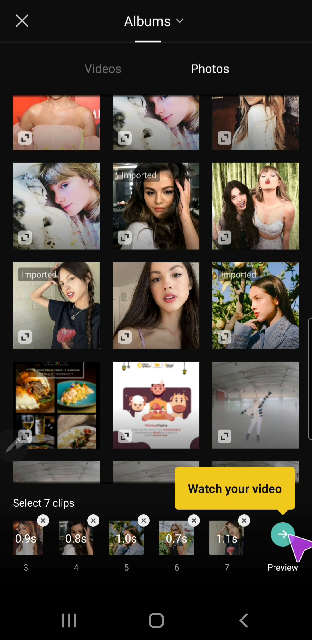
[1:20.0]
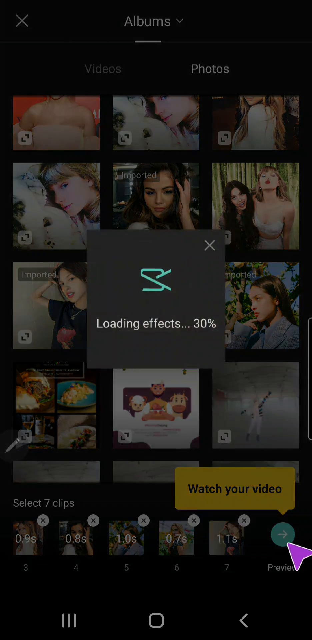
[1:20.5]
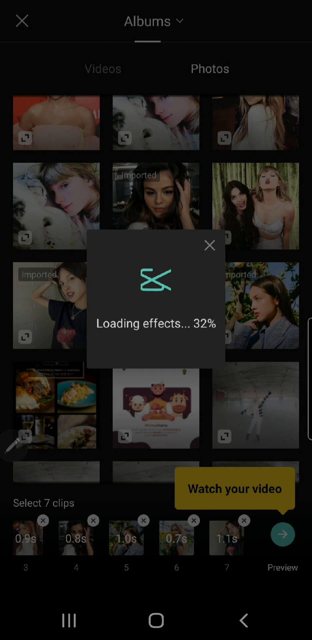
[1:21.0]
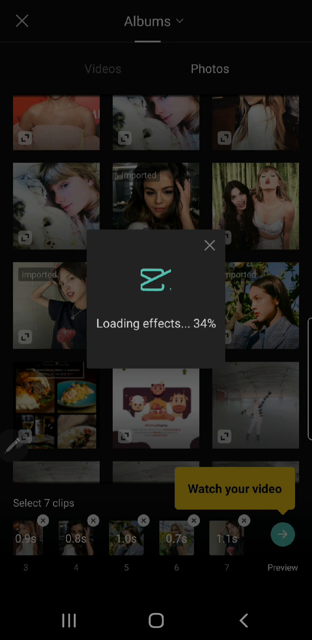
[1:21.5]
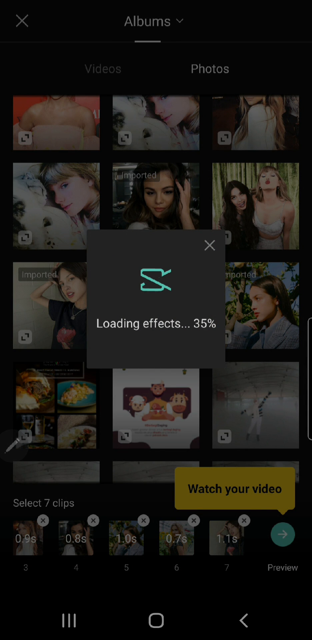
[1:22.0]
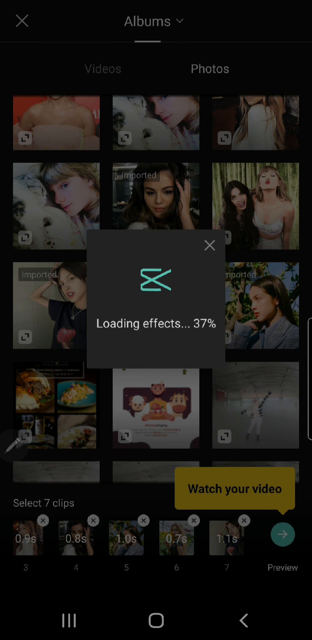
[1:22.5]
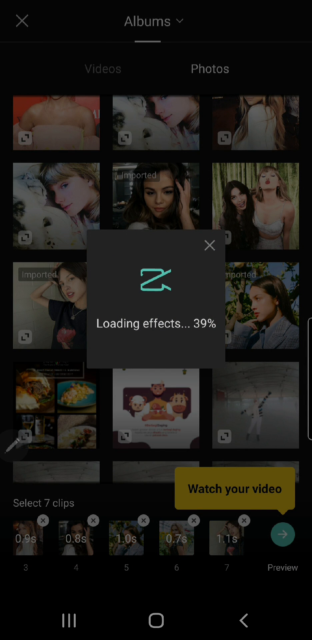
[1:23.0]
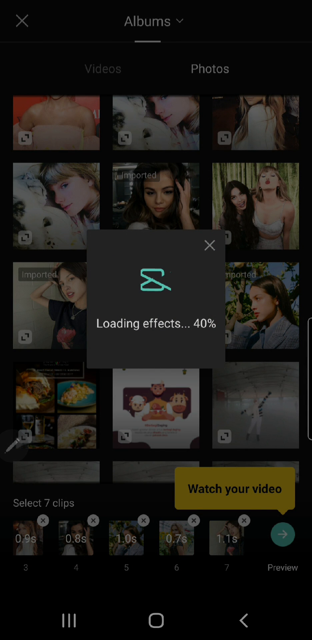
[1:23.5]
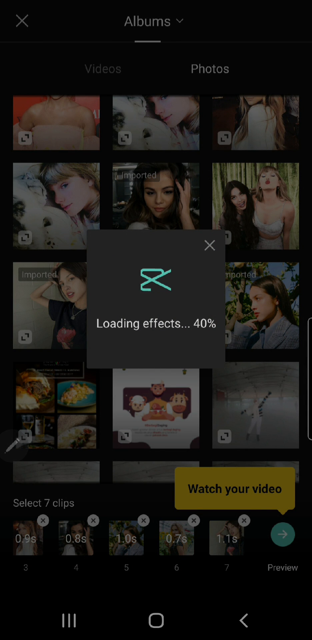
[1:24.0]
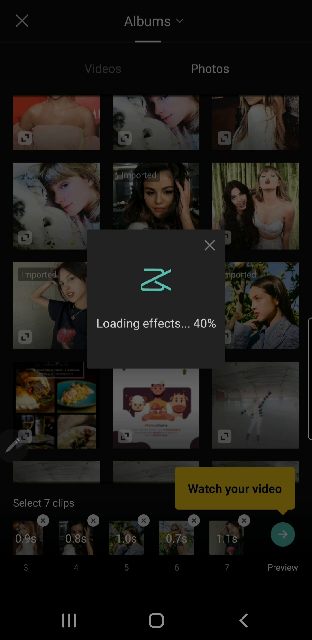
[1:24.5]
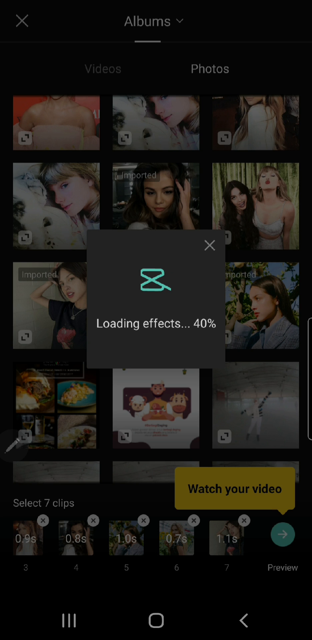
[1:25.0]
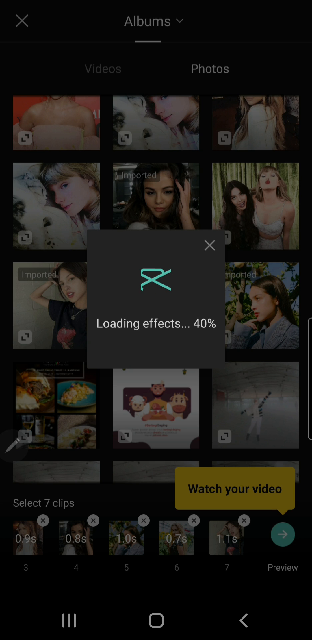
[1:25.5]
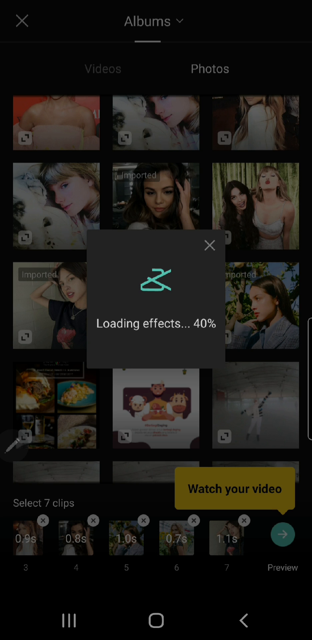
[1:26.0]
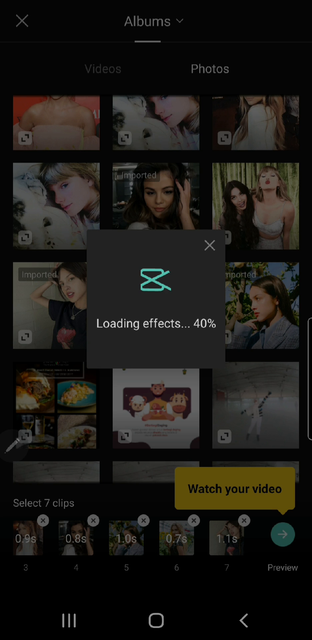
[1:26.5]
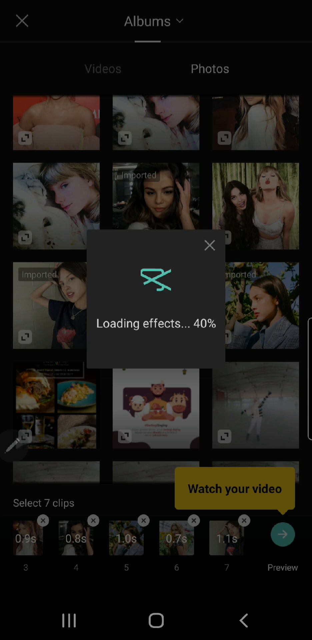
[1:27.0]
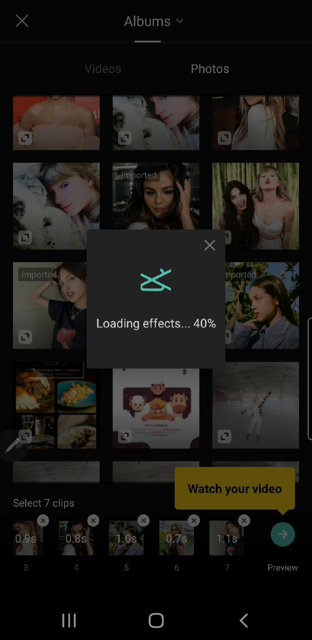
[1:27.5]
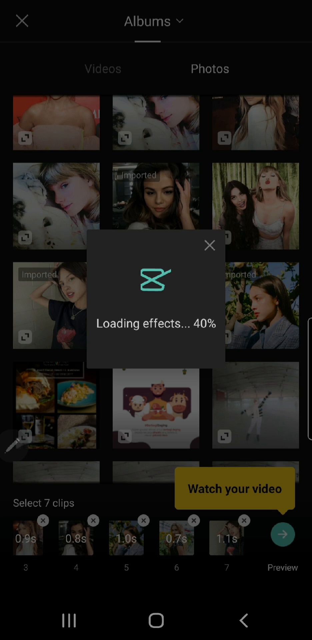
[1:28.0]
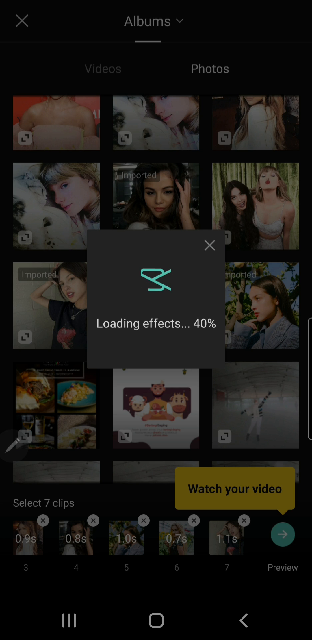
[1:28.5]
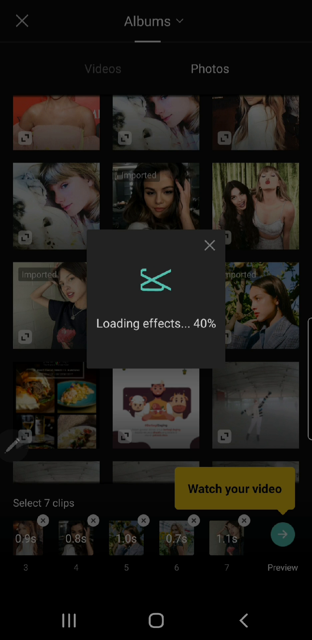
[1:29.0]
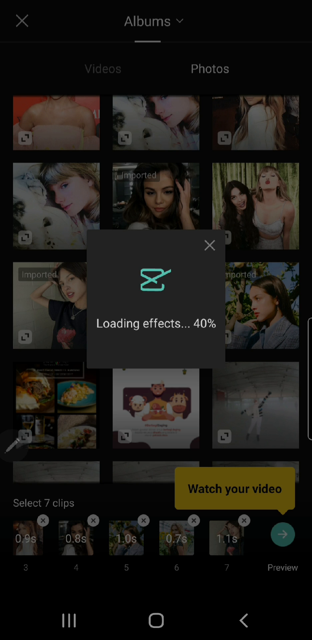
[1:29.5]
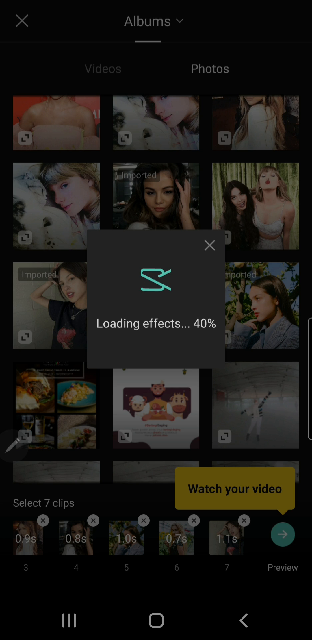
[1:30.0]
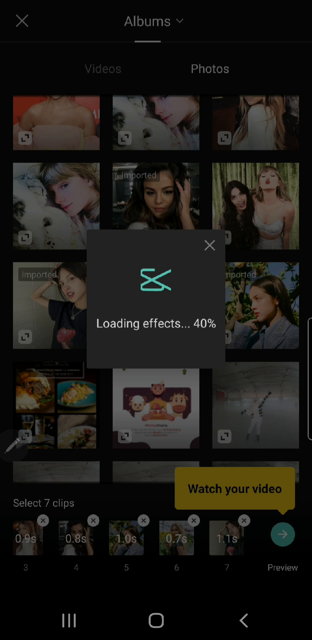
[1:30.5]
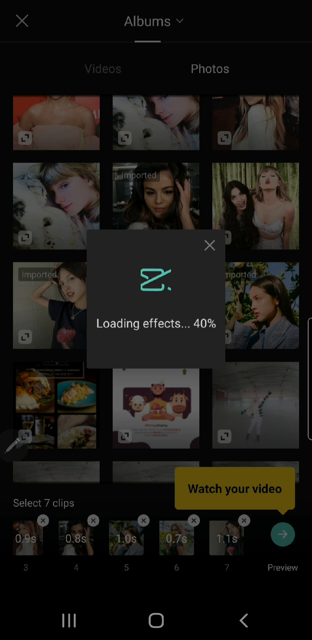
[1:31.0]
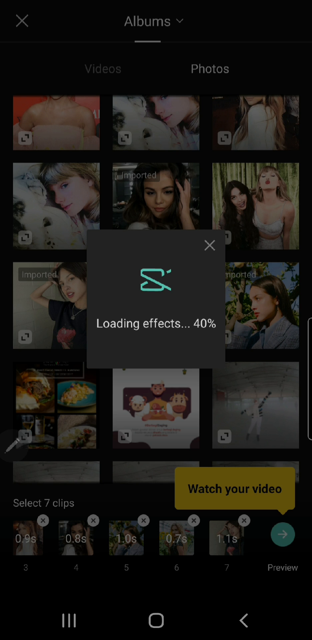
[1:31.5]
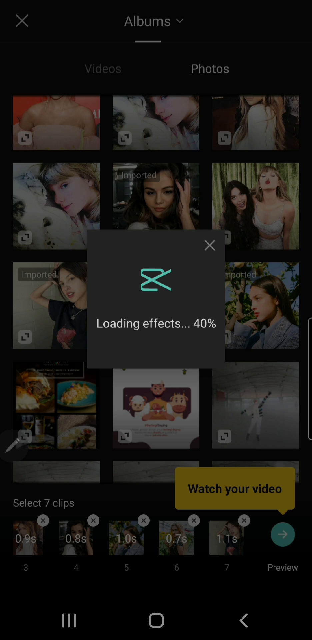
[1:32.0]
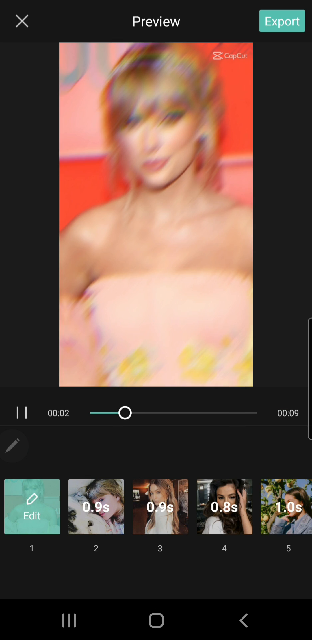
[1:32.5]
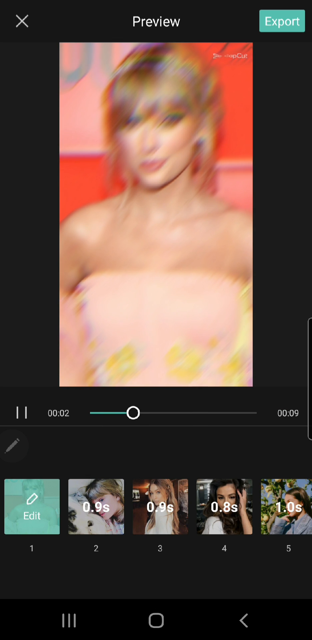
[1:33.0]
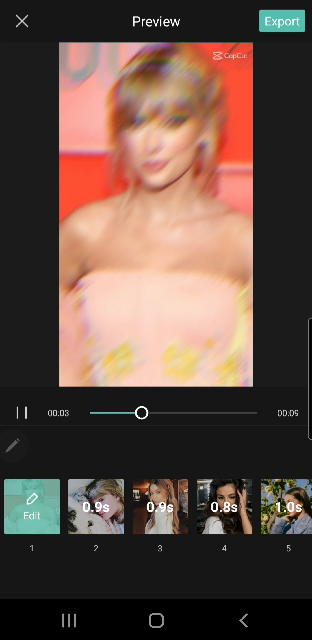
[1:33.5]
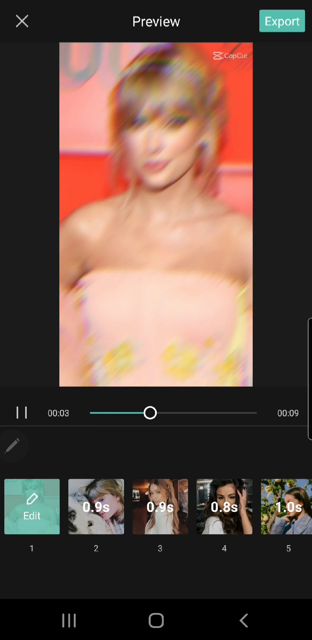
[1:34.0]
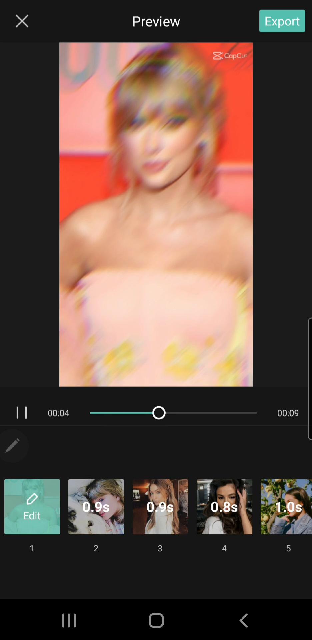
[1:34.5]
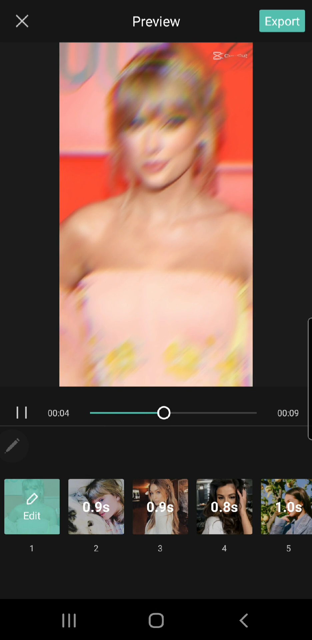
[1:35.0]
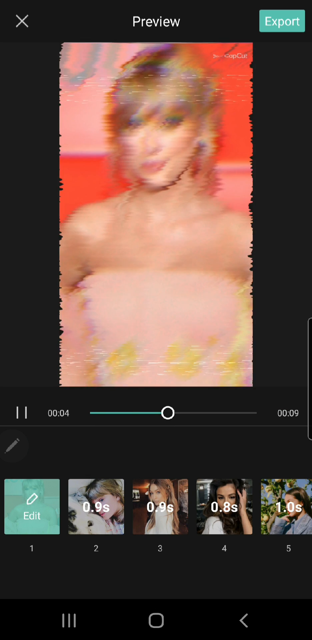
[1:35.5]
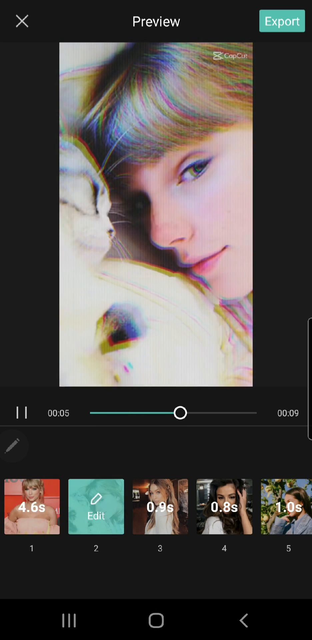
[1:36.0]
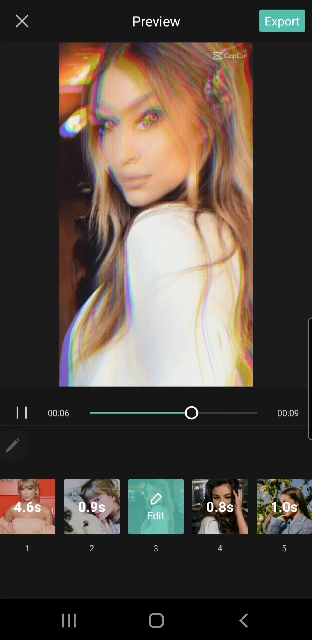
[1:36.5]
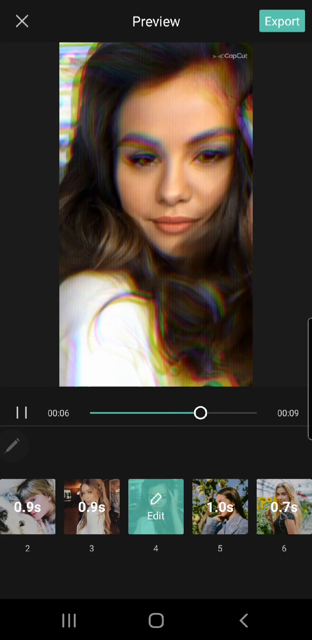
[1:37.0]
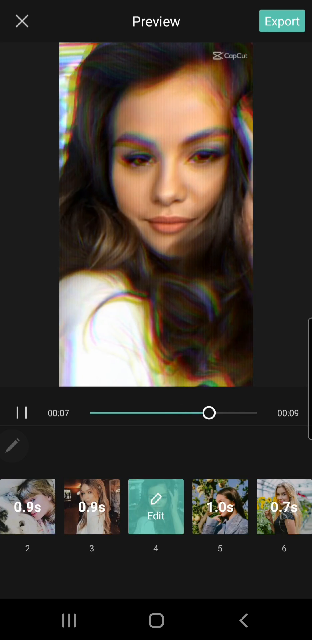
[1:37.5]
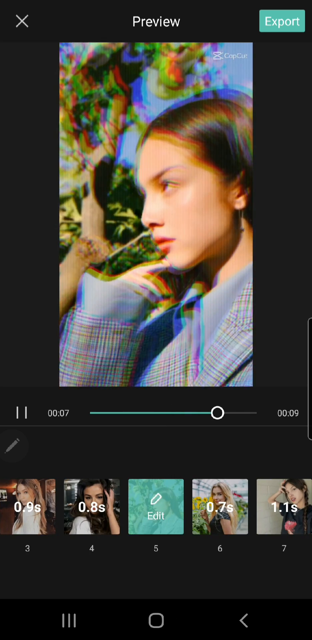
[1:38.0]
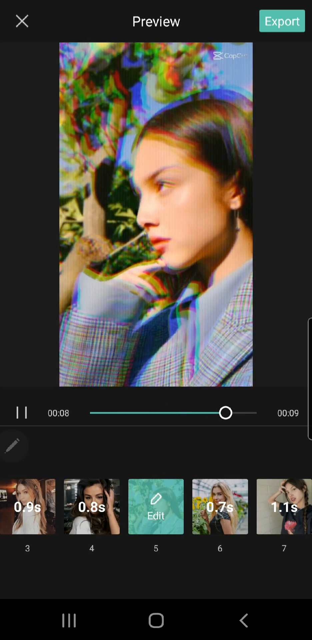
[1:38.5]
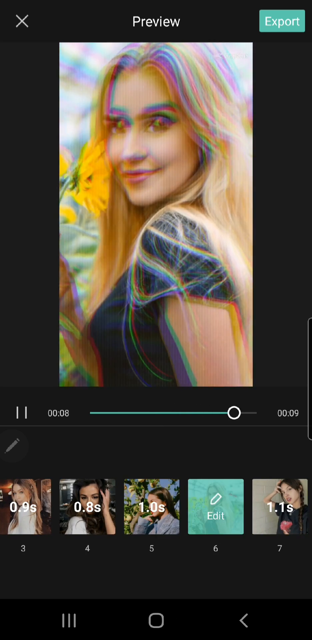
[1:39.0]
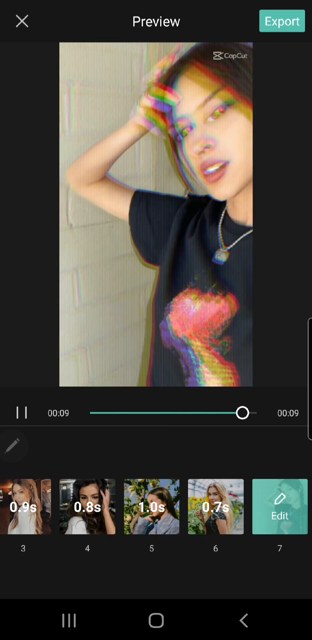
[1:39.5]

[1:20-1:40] After the preview button in the bottom right corner is clicked, text above it to the left says "watch your video". A small gray square window pops up in the center saying "loading effects", with a percentage that rises from the 30s to 40%, and a sort of blue hourglass design that loads. The square disappears, and the created video plays: a blurred image of Taylor Swift, another image of Taylor Swift, then other female artists, including Selena Gomez. The pictures look blurred and look like they are moving.